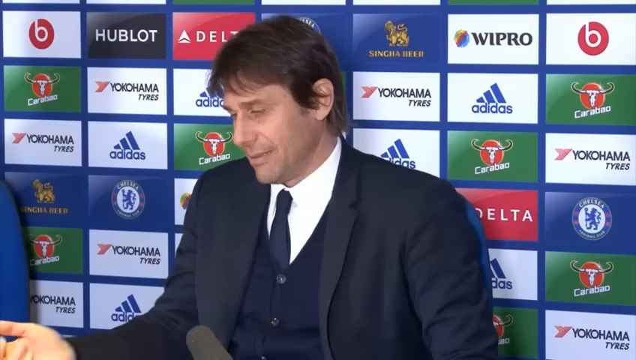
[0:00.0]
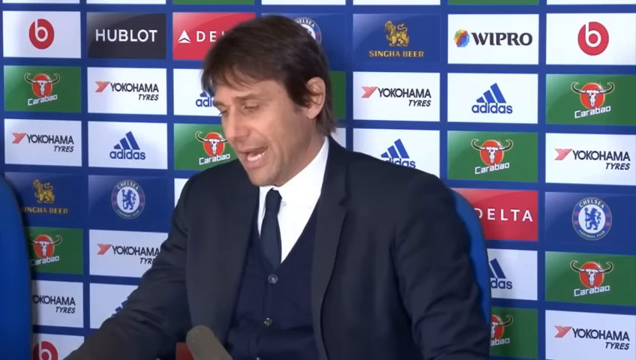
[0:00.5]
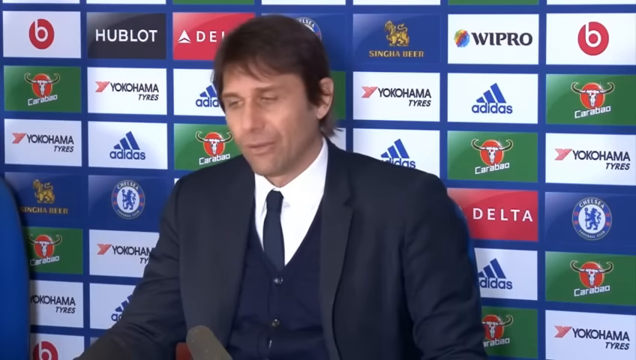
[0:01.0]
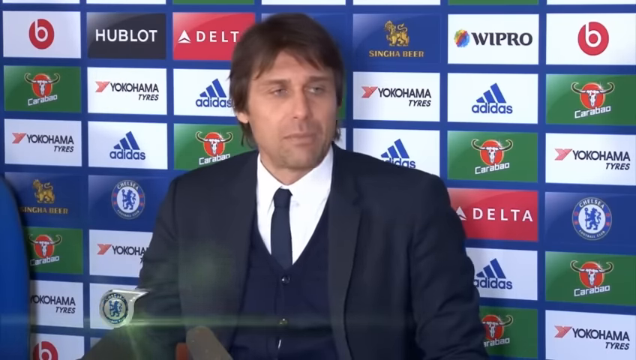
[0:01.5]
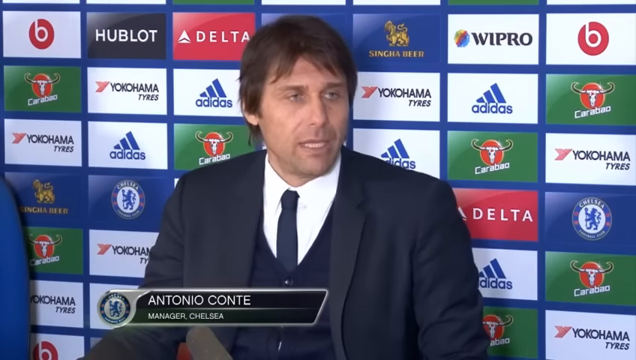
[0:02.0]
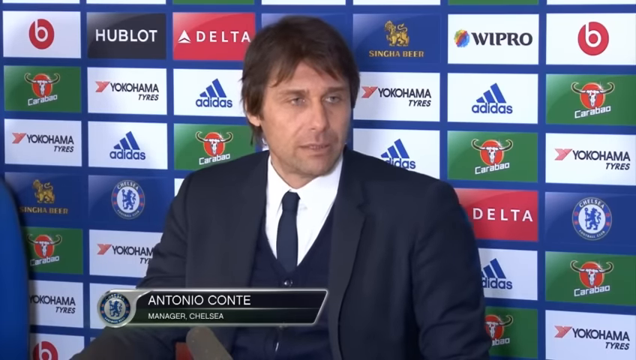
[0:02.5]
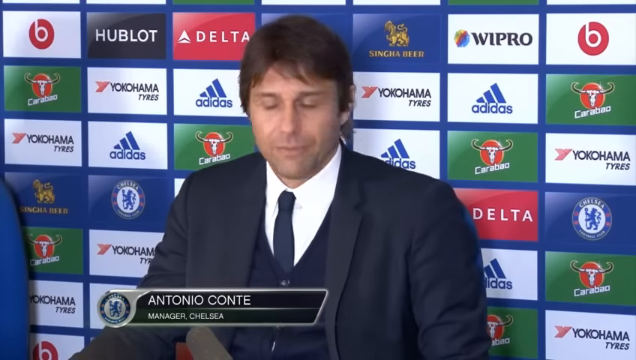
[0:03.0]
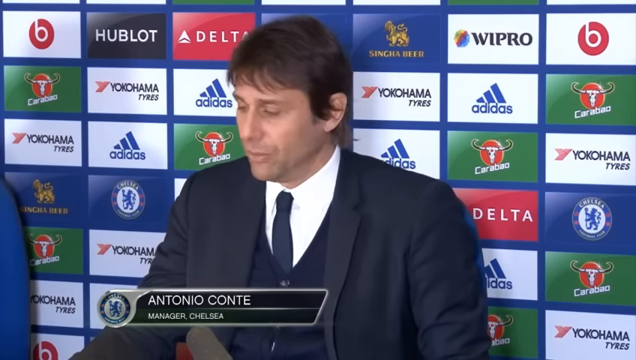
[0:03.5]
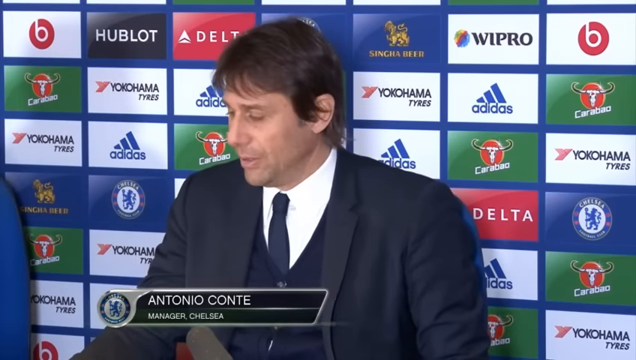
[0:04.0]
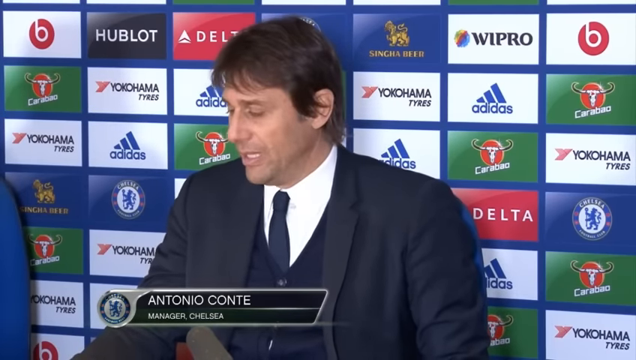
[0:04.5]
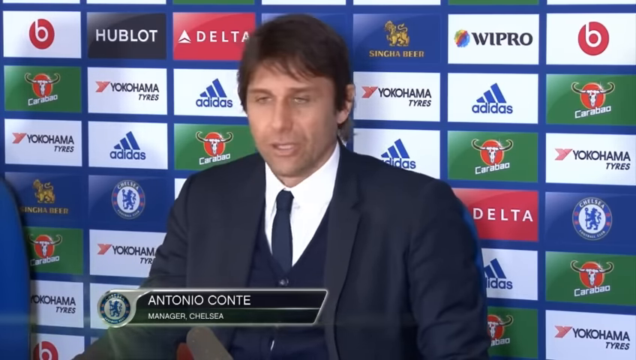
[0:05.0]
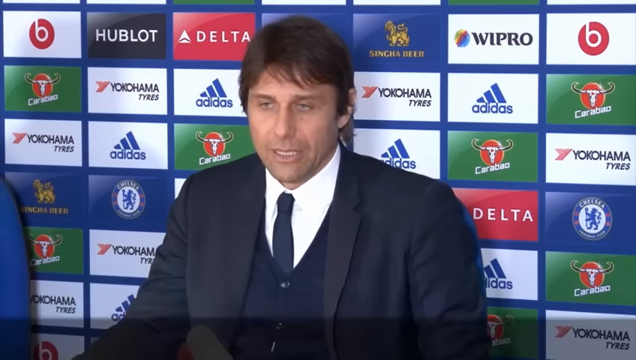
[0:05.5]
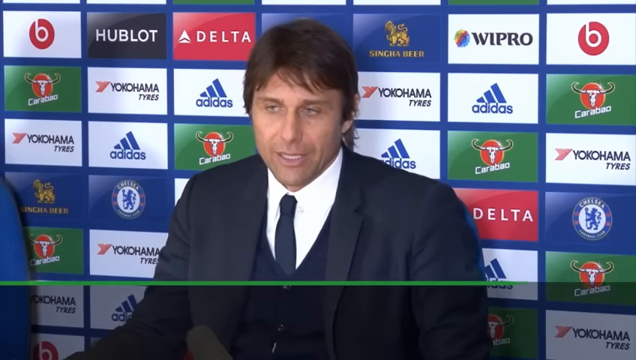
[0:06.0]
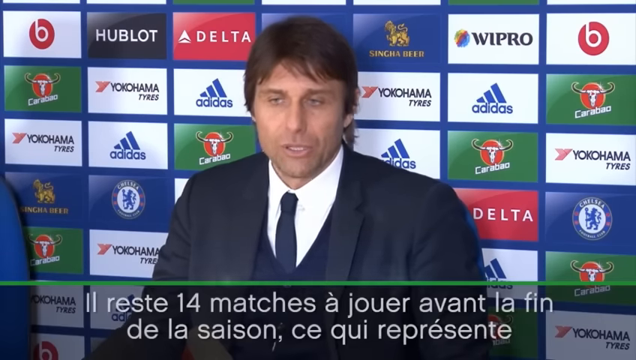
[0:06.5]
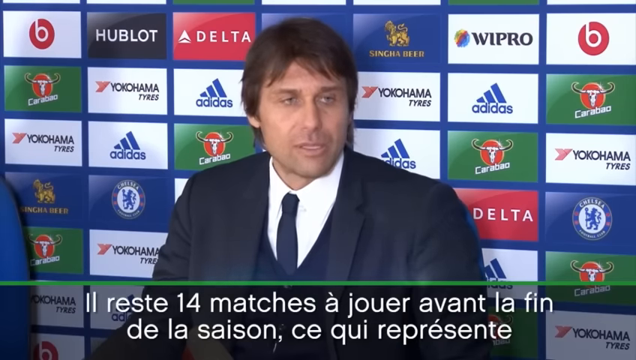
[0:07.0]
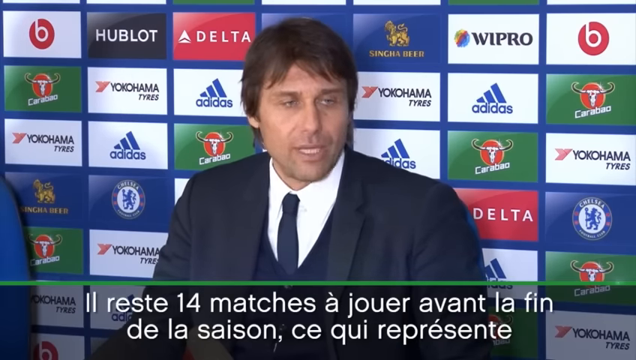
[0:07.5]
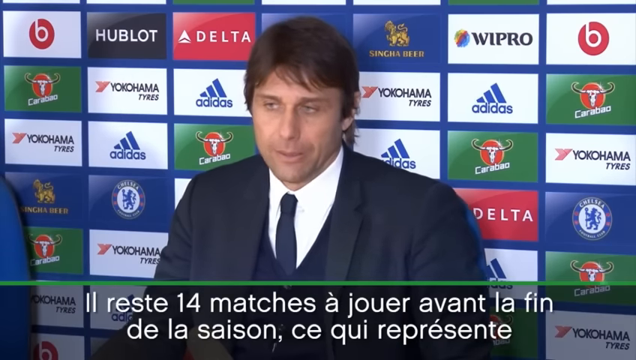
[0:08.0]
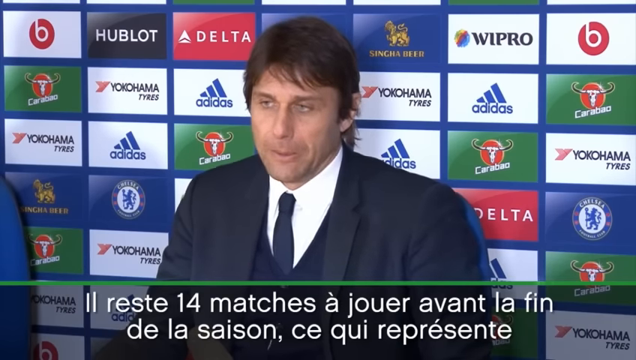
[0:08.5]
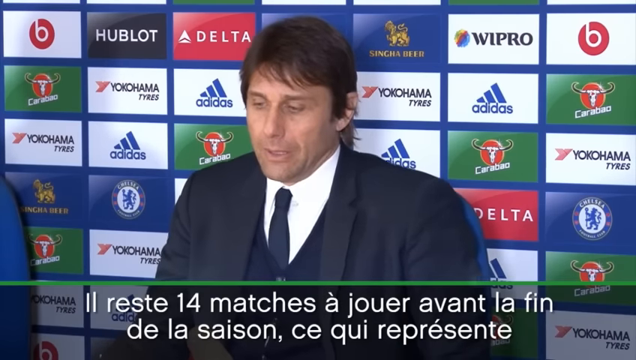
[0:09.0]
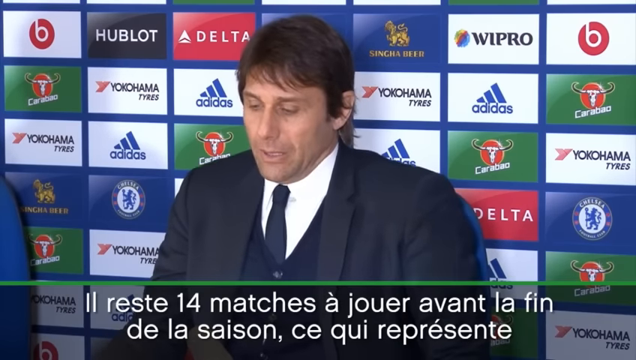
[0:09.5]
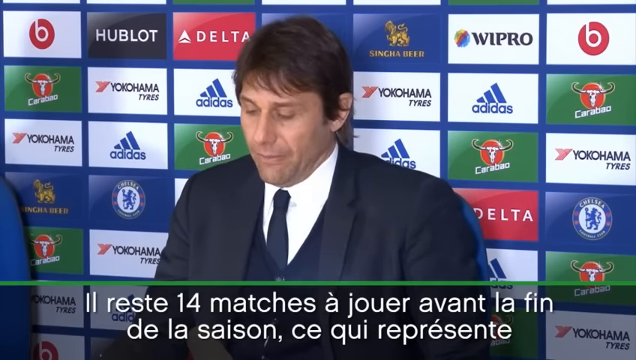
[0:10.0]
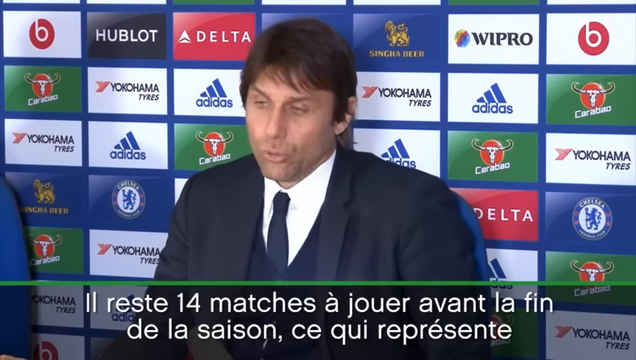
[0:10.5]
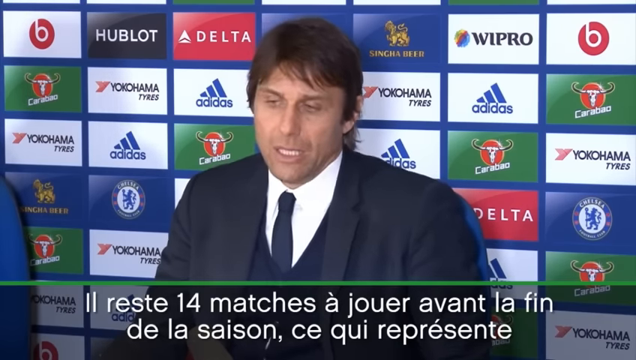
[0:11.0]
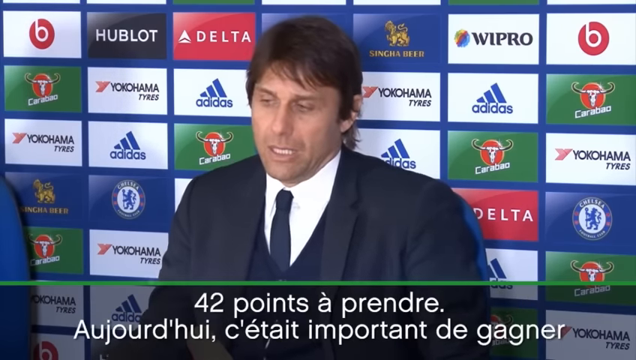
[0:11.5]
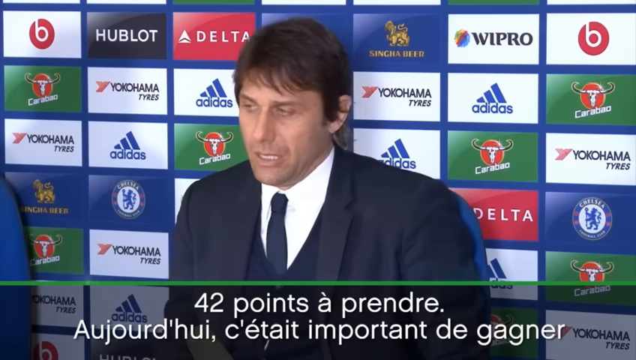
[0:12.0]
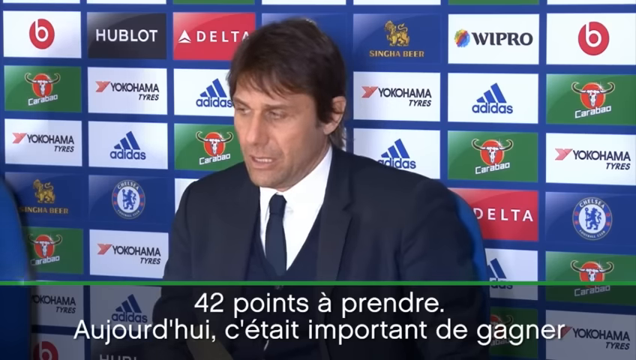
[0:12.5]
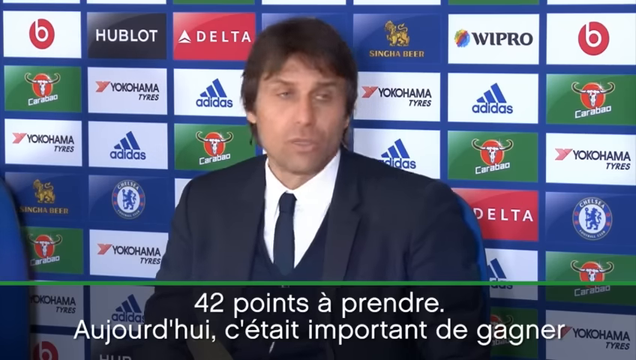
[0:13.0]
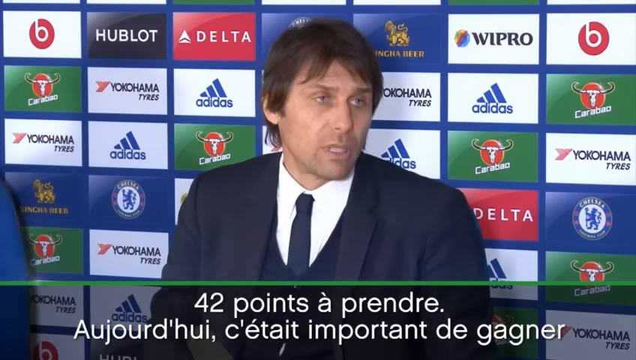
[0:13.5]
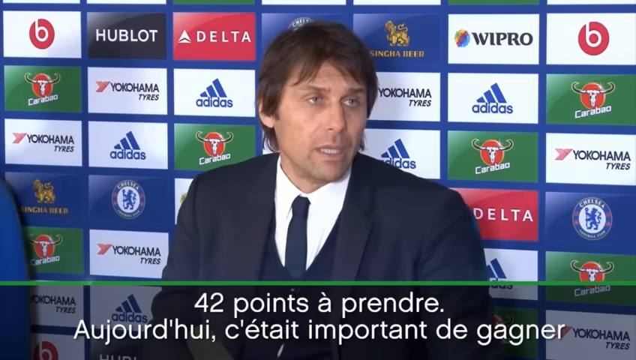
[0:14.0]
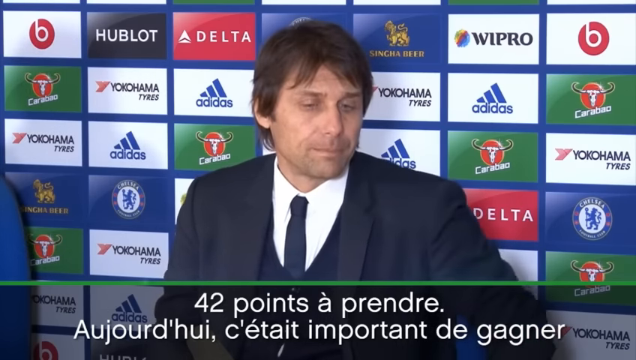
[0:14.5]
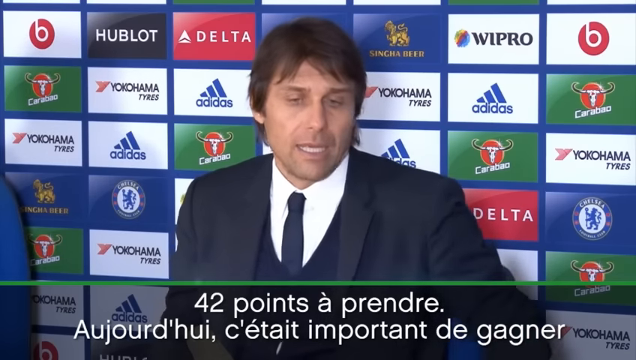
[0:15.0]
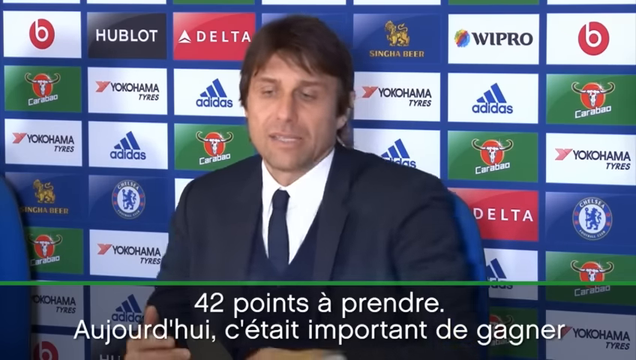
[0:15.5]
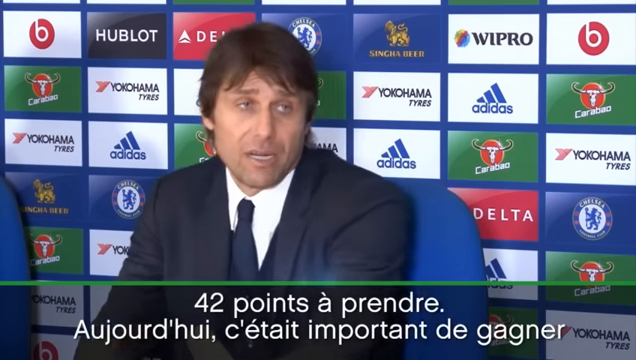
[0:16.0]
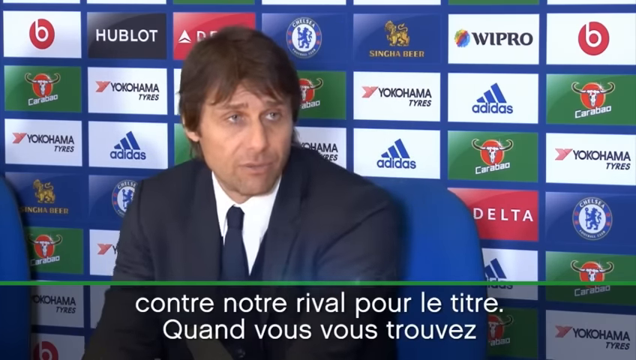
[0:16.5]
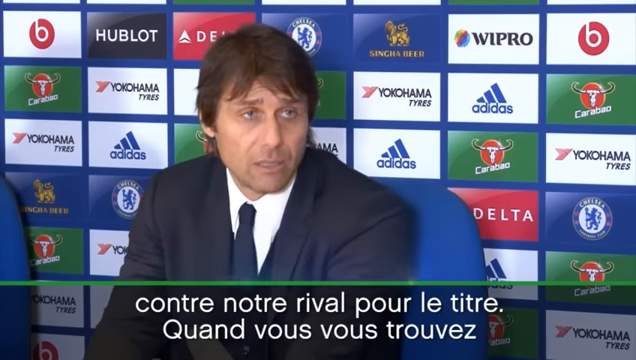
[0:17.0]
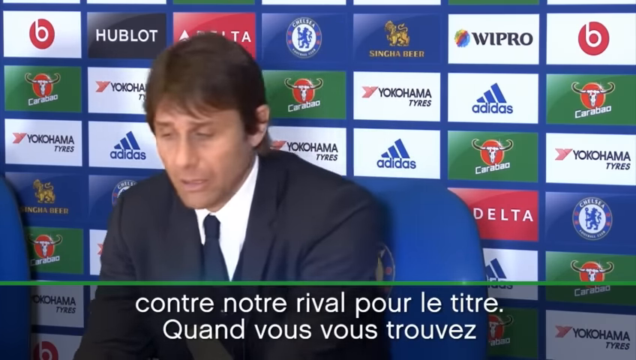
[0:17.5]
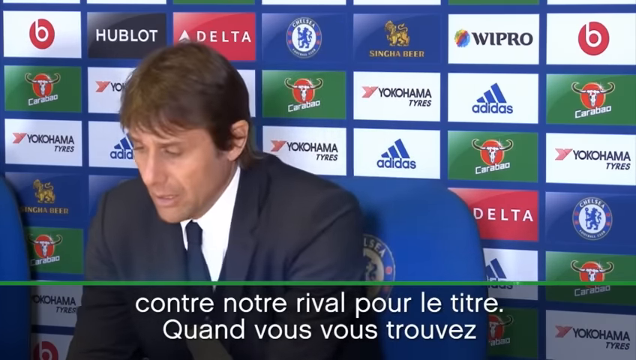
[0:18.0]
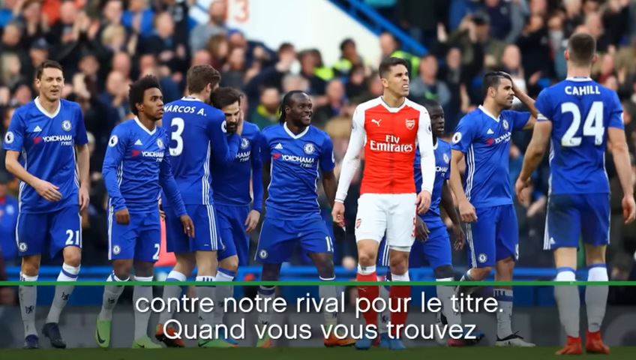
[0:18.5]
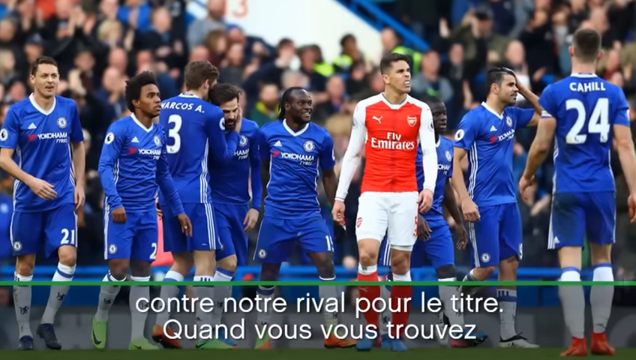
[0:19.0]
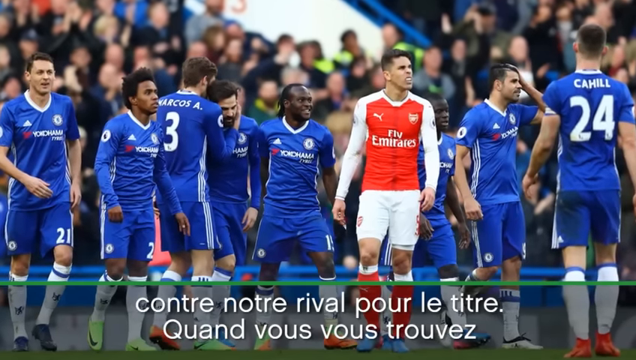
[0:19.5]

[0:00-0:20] A man in a black suit with a white shirt and a black tie is standing in front of what appears to be a podium and a microphone. He has sort of long brown hair that hangs in his face. Behind him is a blue board background with multiple rectangular shapes on it. One white one is the Target logo; underneath it is the Caribou logo, and underneath that is a Yokohama logo. There is also an Adidas logo, a Senya beer logo and a Wipro logo, along with the Delta logo, the Hoblot logo, and a blue logo with a circle and a lion in the middle, plus a few other unidentified logos. The man is speaking to the audience and seems worried.